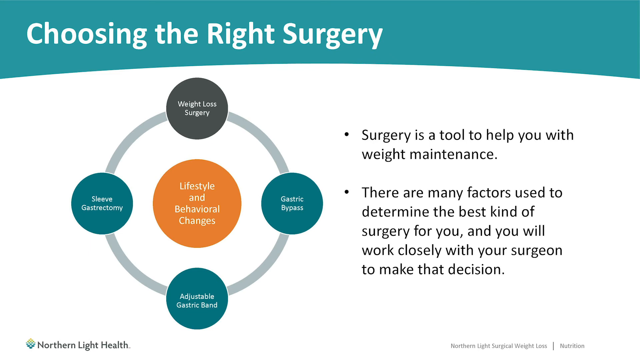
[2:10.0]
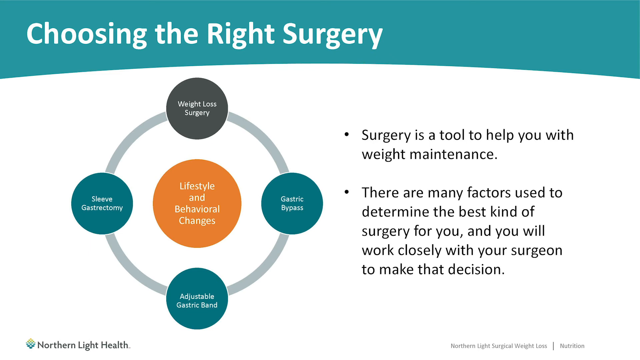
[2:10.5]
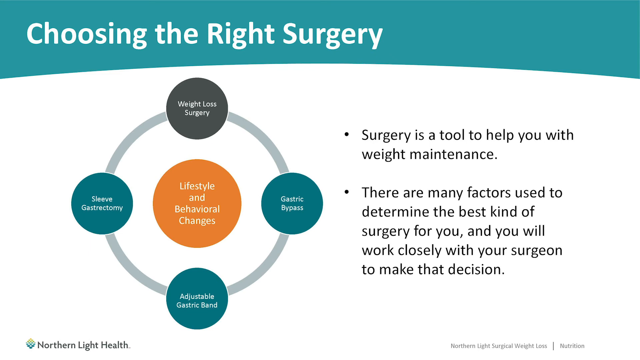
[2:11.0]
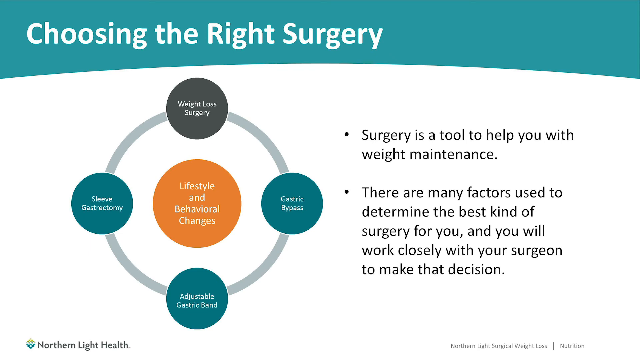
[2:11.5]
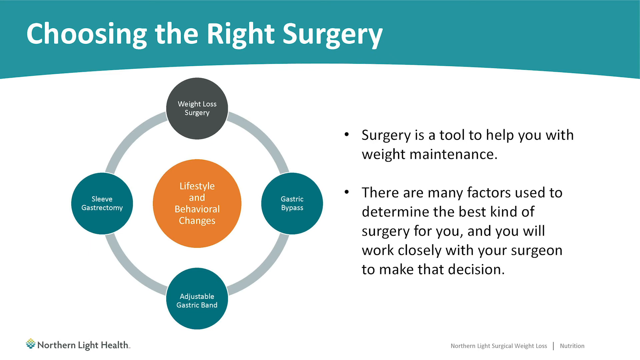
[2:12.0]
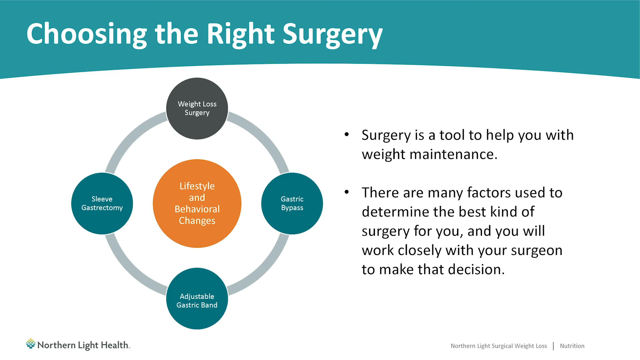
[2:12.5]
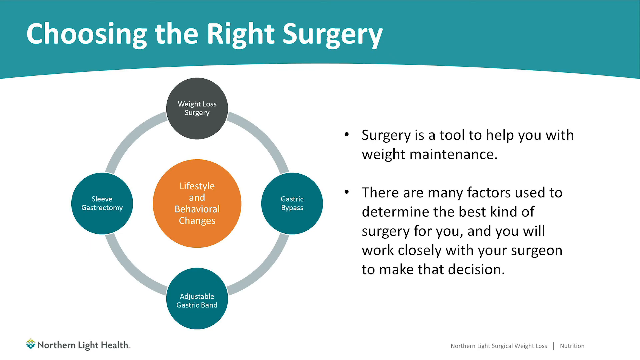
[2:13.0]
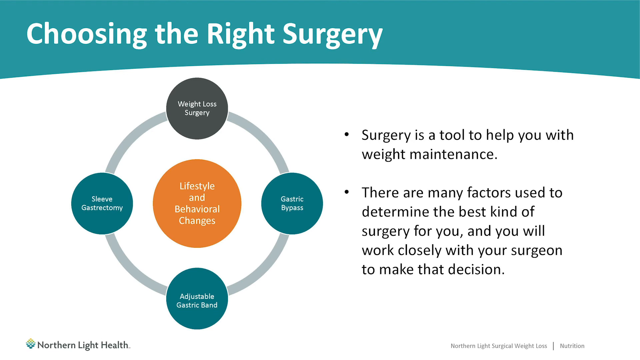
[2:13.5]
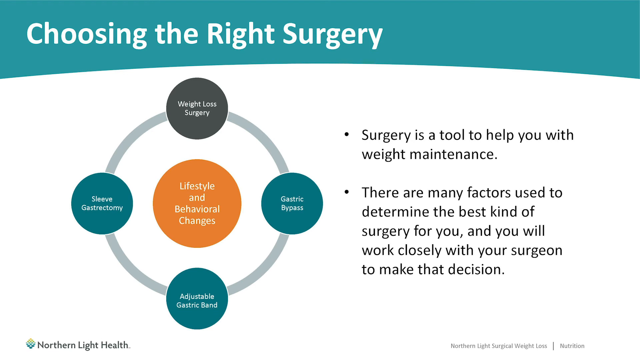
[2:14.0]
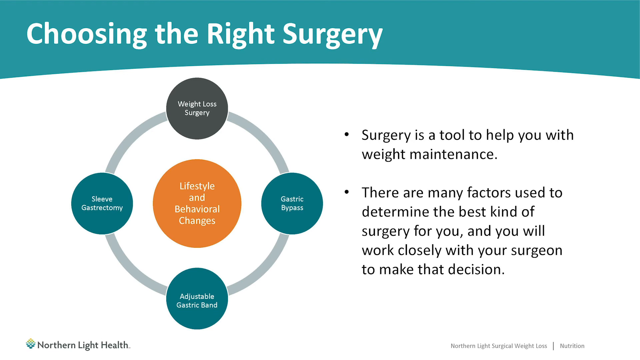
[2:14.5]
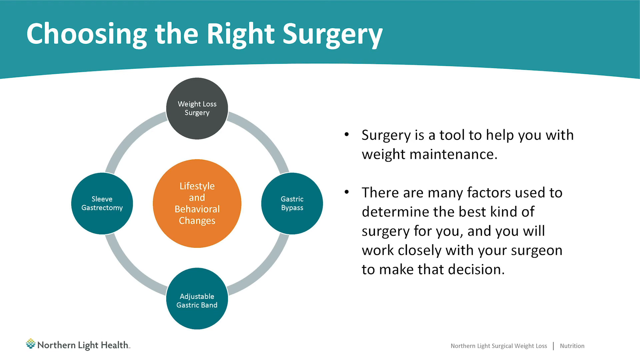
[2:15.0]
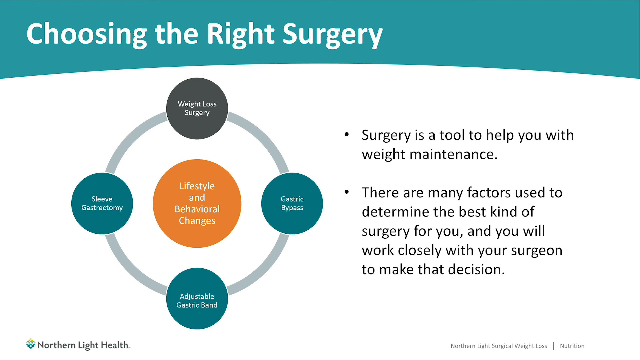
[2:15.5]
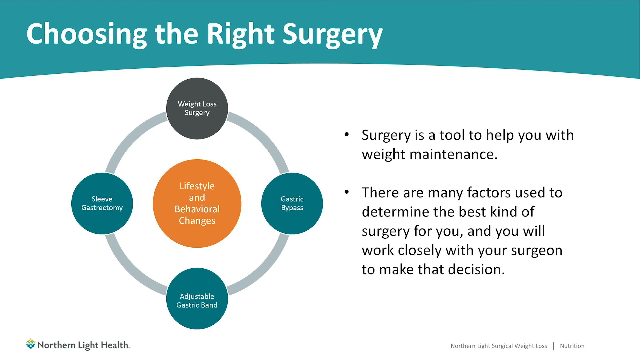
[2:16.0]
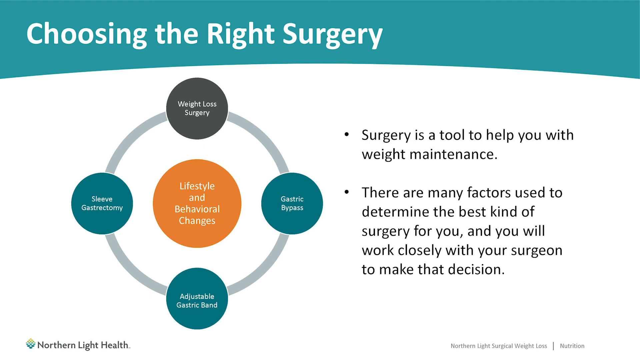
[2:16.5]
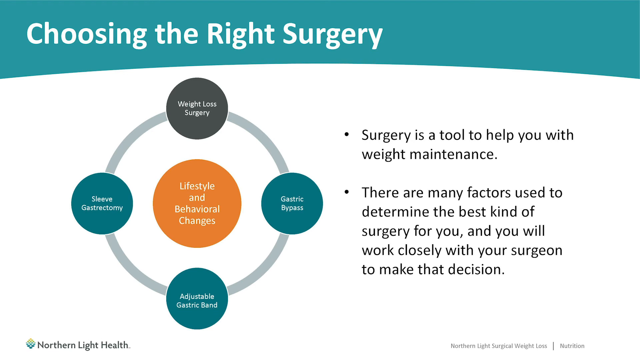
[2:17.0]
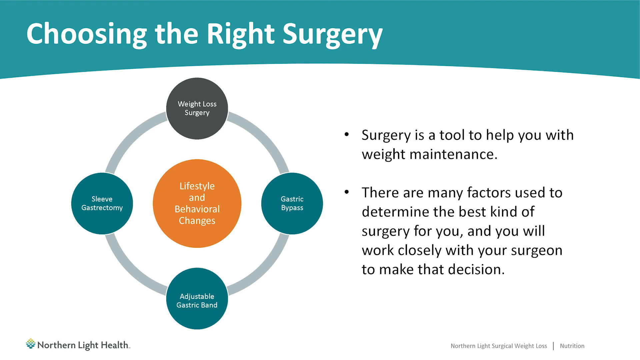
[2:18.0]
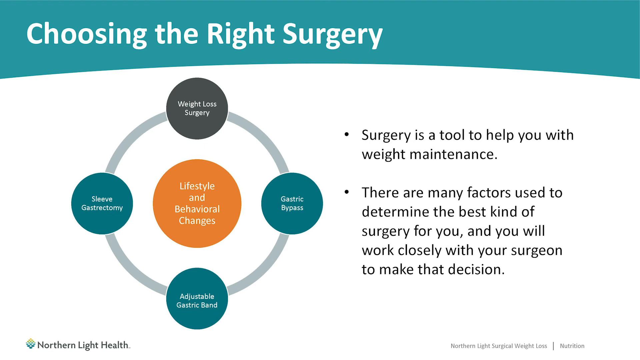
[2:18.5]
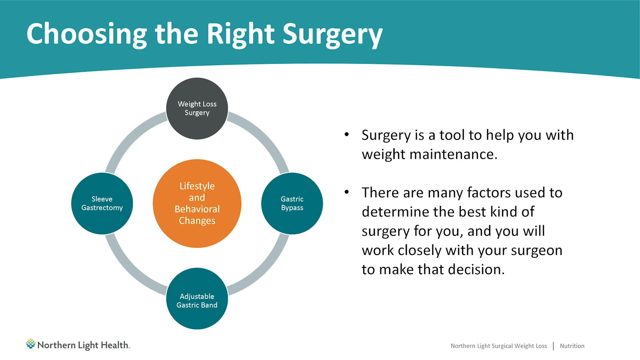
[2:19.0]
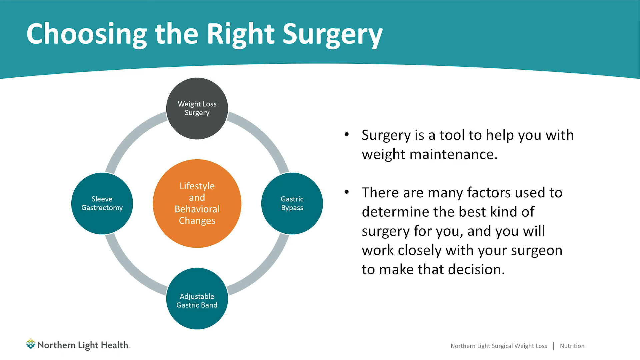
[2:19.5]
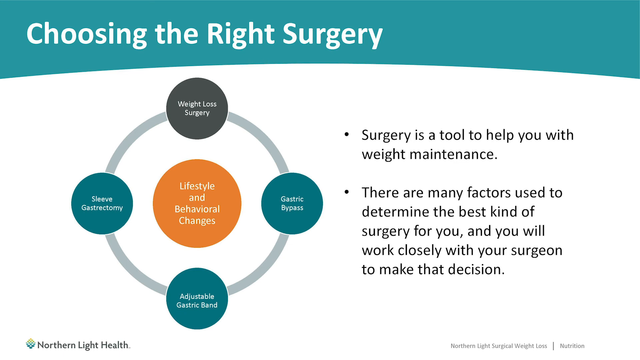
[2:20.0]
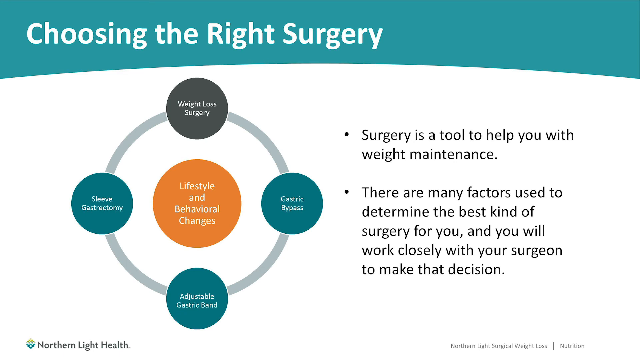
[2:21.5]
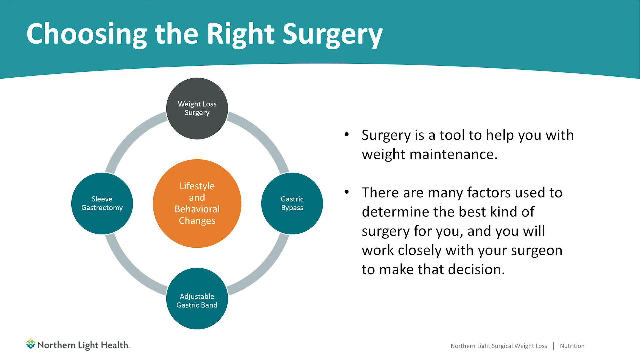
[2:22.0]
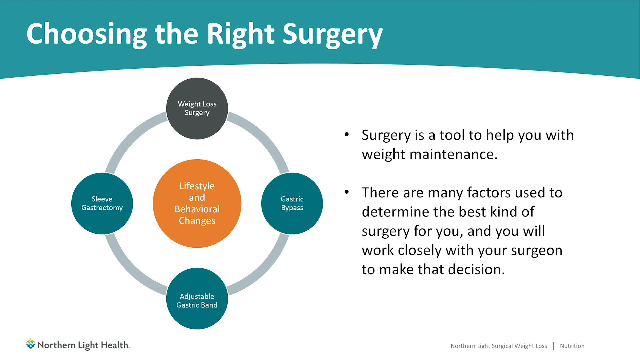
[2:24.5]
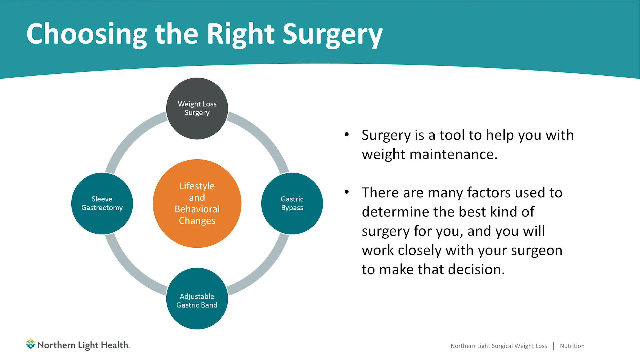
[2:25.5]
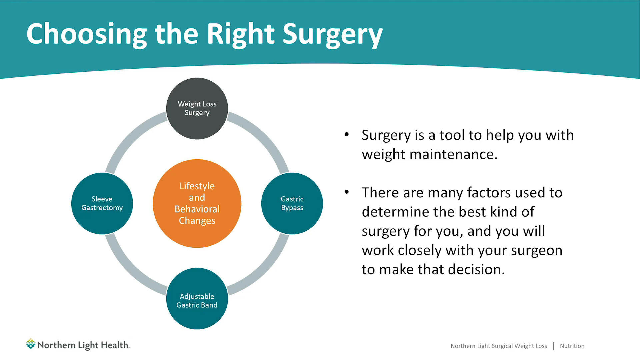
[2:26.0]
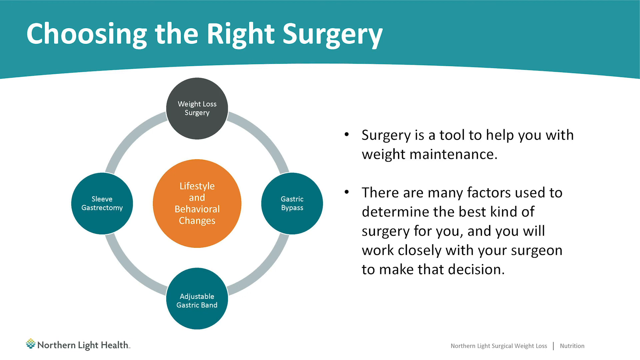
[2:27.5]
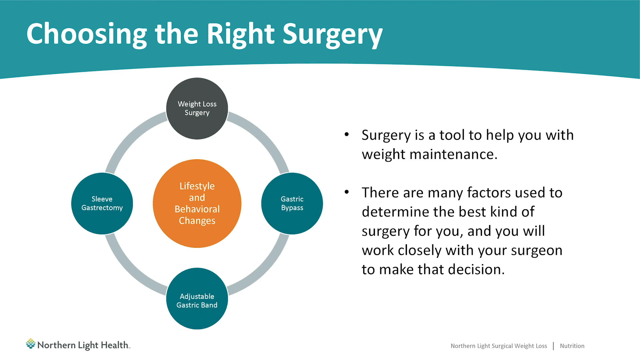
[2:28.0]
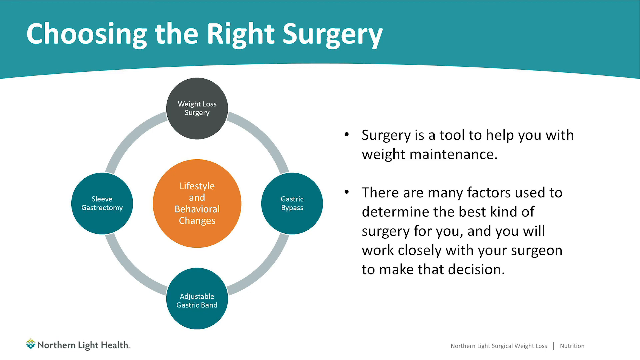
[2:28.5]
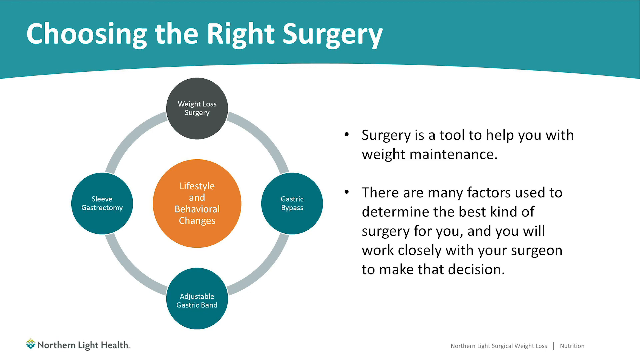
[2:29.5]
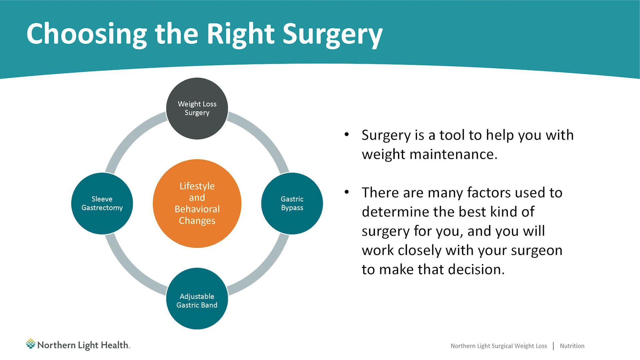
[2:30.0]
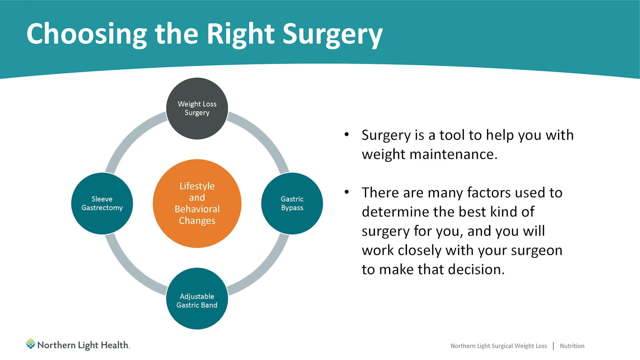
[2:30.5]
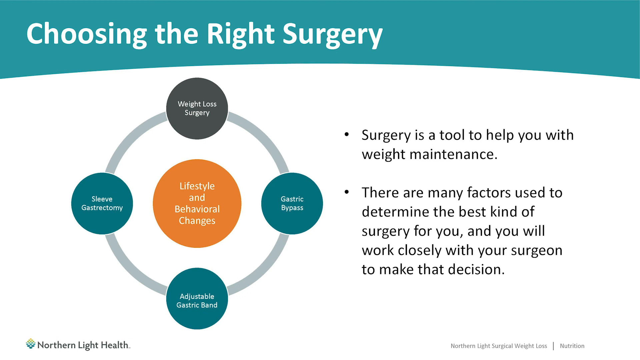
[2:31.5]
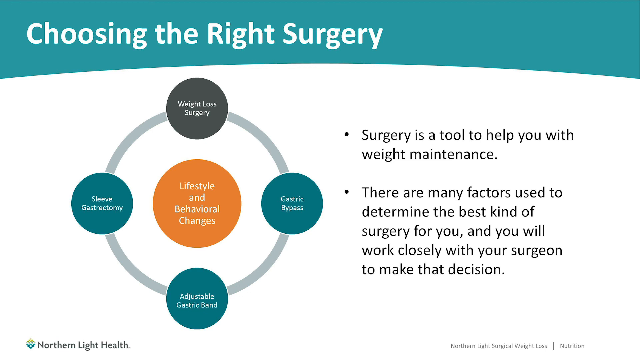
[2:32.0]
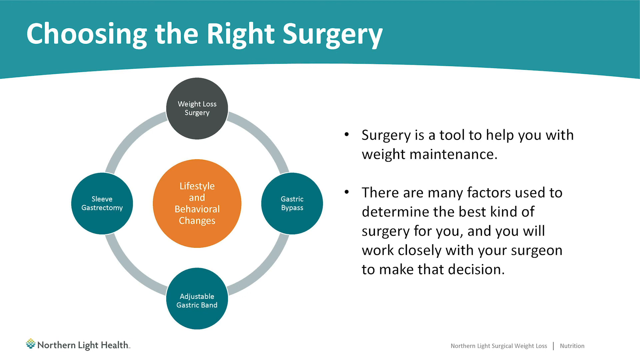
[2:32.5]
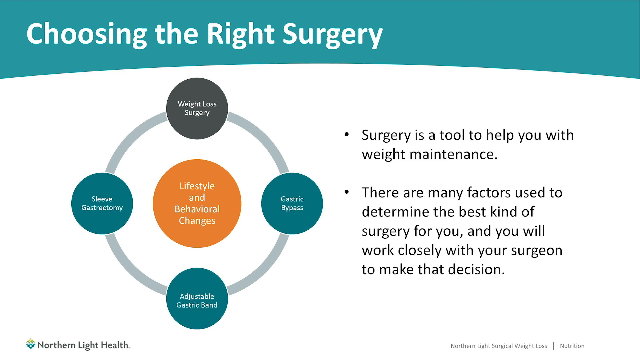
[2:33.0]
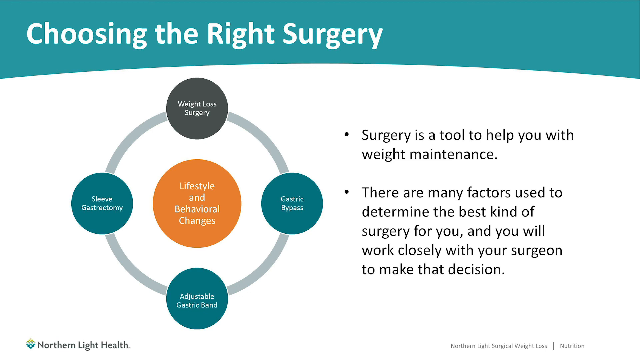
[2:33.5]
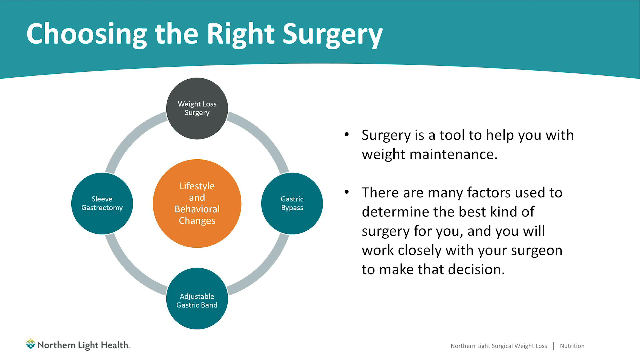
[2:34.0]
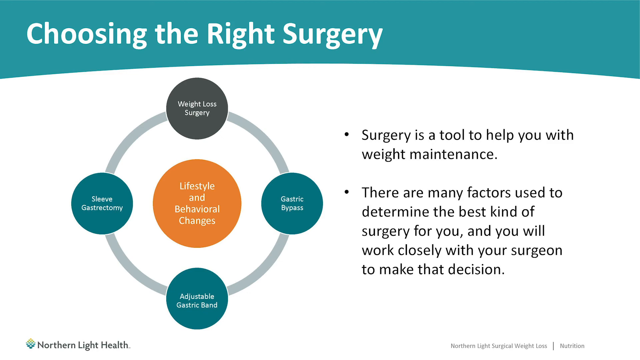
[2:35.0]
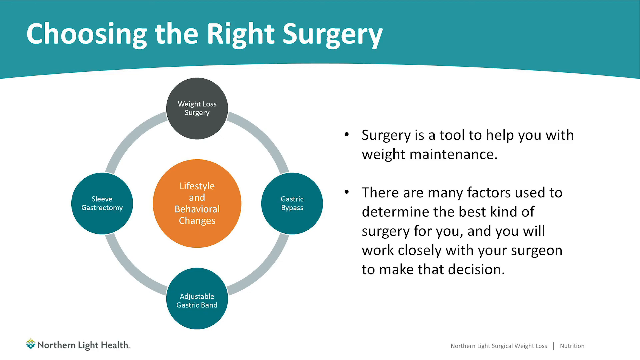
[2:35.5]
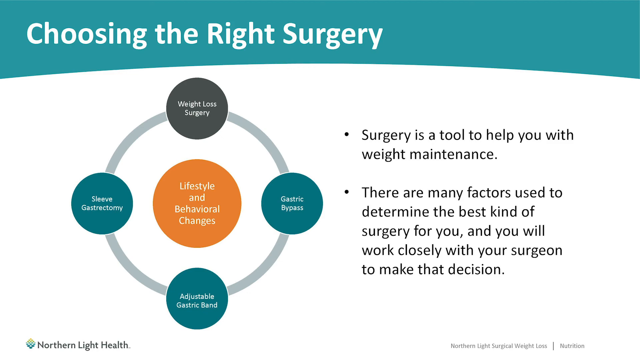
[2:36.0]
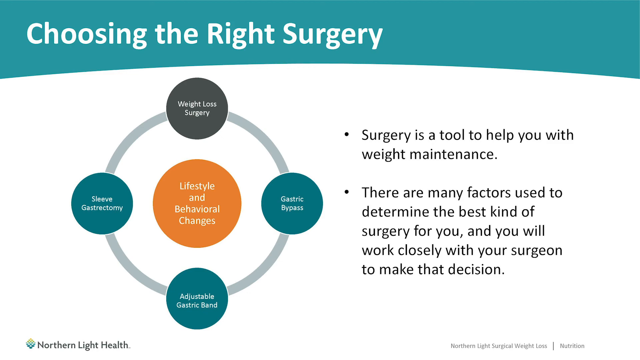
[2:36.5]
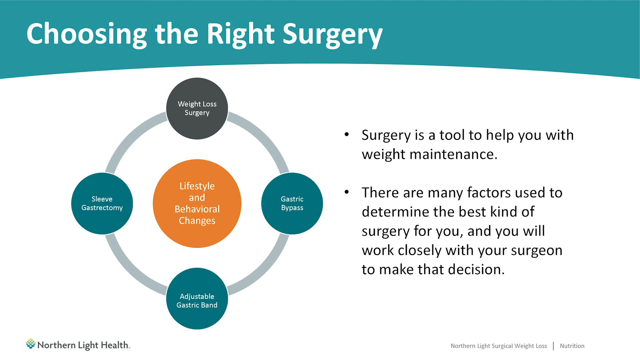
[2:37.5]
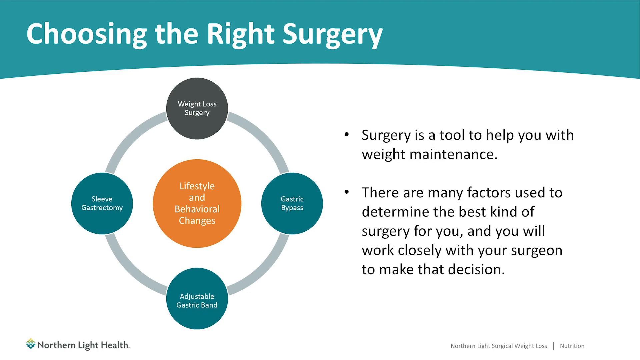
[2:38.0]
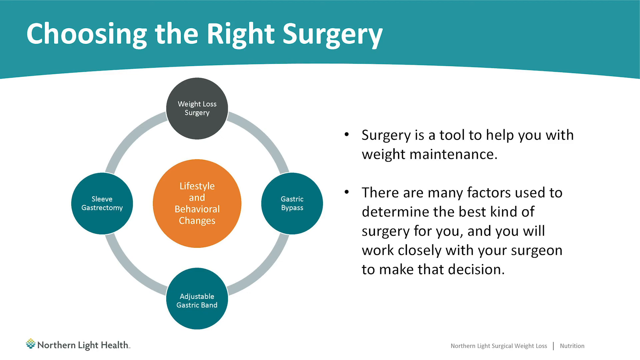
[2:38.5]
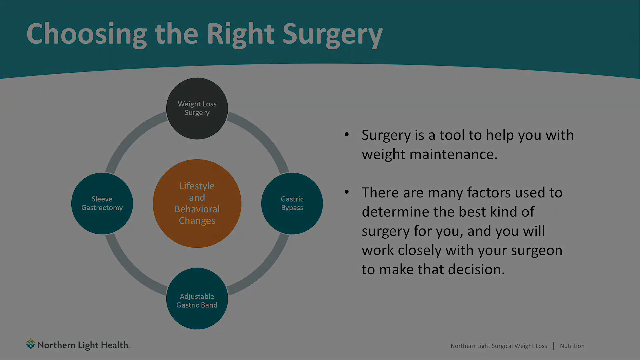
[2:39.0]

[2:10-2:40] The PowerPoint presentation shows the title "Choosing the Right Surgery" in white lettering at the top. To the right it says "Surgery is a tool to help you with weight maintenance. There are many factors used to determine the best kind of surgery for you, and you will work closely with your surgeon to make that decision." The left-hand side of the screen features a diagram with a gray ball or circle, three blue circles, and an orange circle in the middle. The orange circle says "Lifestyle and Behavioral Changes," the gray circle says "Weight Loss Surgery," and the blue circles say "Gastric Bypass," "Adjustable Gastric Band," and "Sleeve Gastrectomy." All the circles are connected by a thin gray band. There is a logo in the bottom left, and small words in a black font in the bottom right are too small to read.